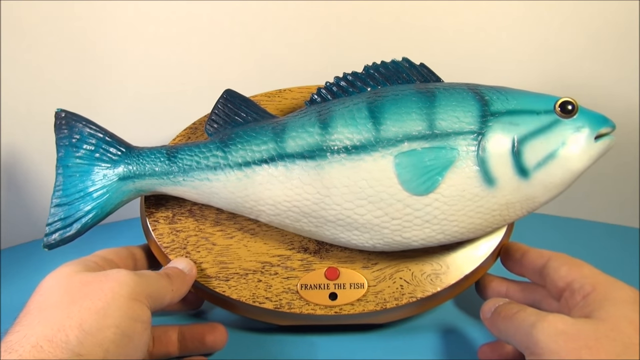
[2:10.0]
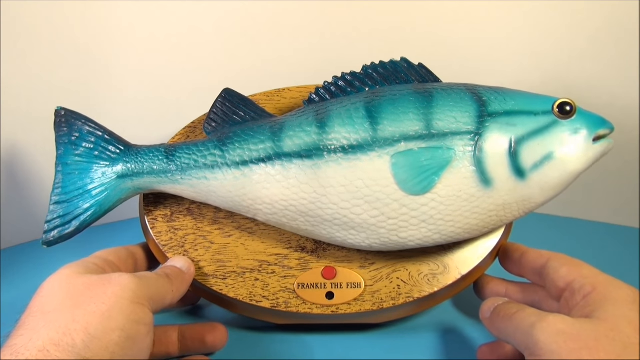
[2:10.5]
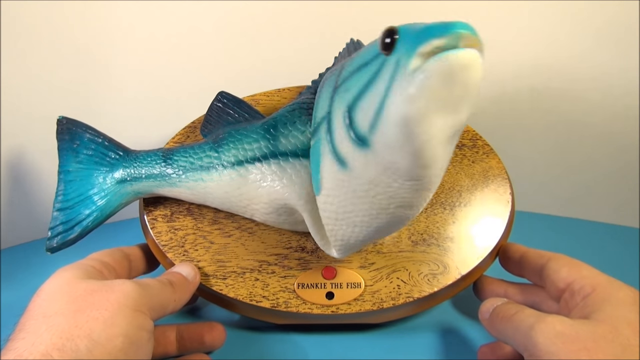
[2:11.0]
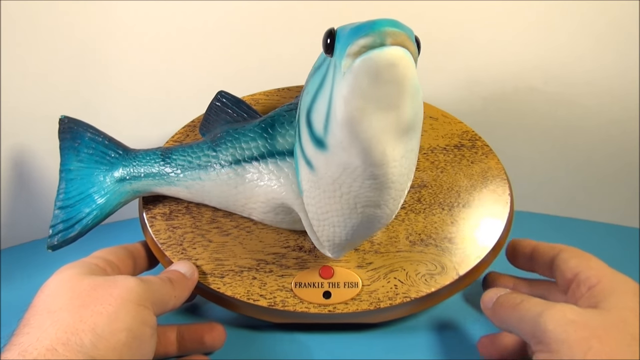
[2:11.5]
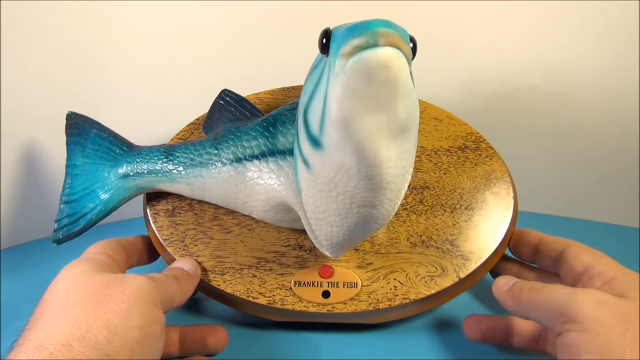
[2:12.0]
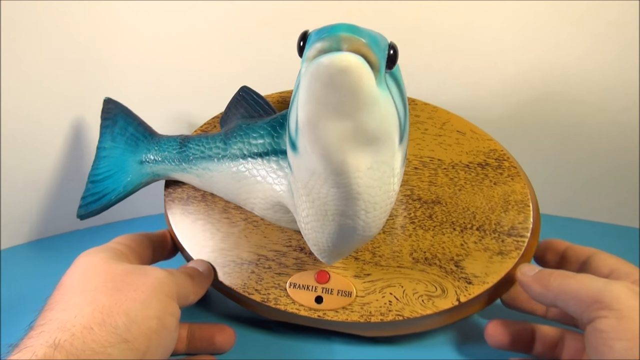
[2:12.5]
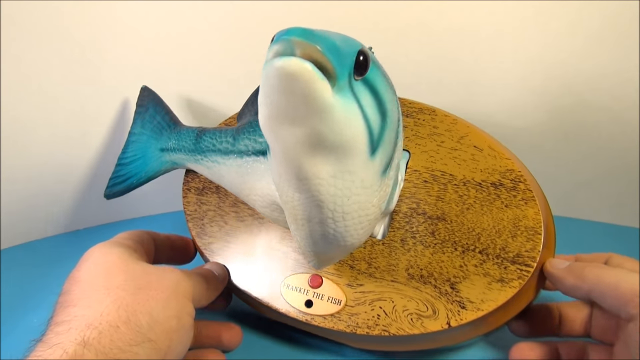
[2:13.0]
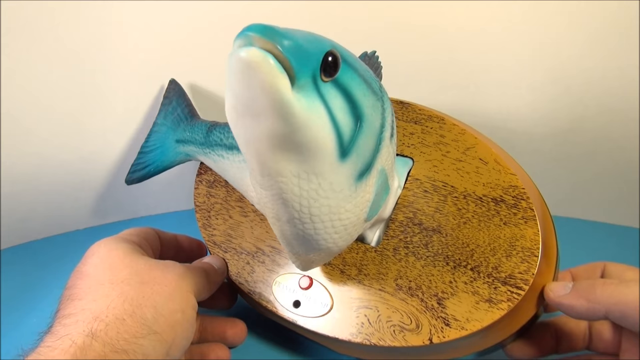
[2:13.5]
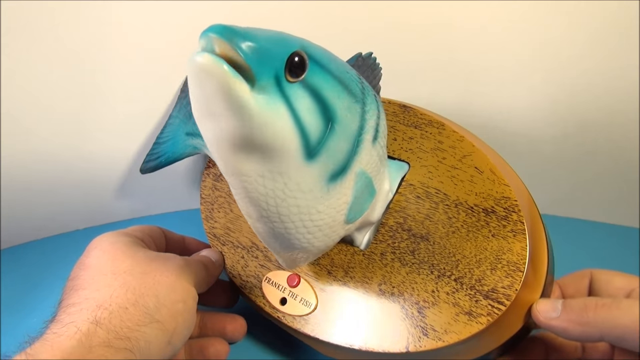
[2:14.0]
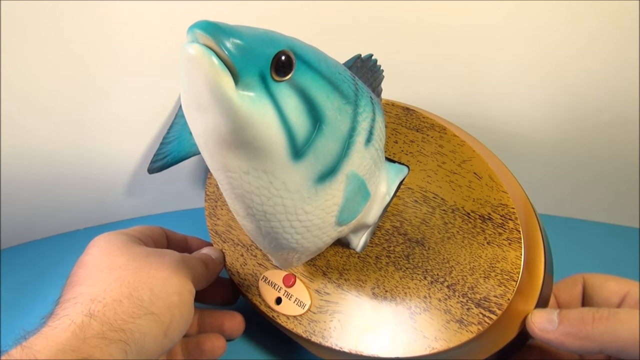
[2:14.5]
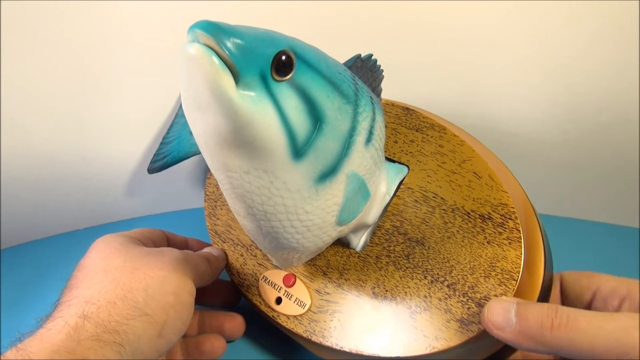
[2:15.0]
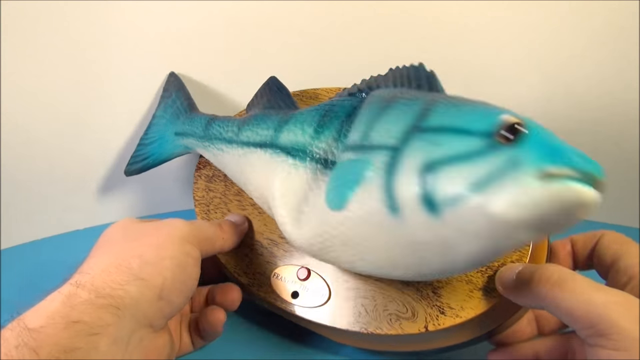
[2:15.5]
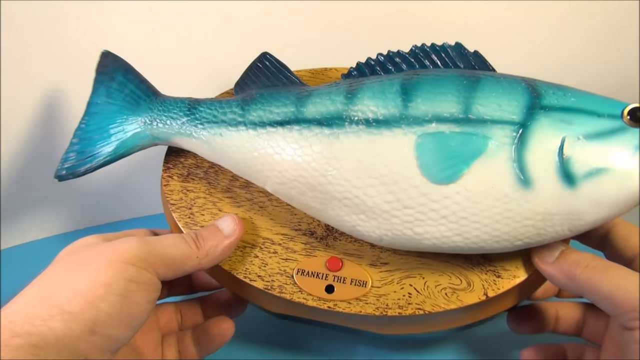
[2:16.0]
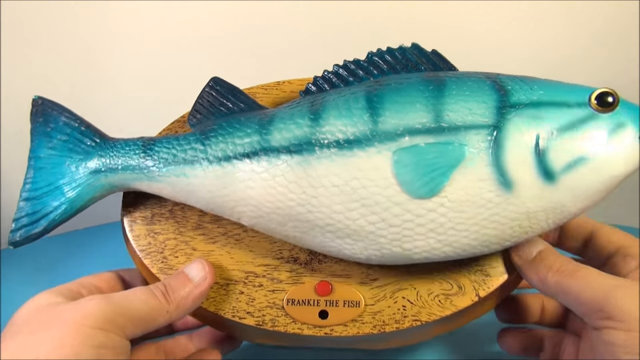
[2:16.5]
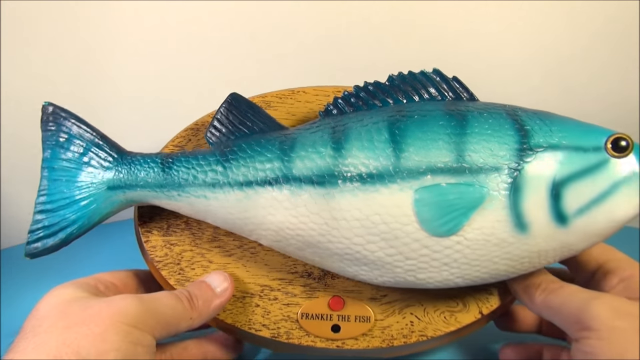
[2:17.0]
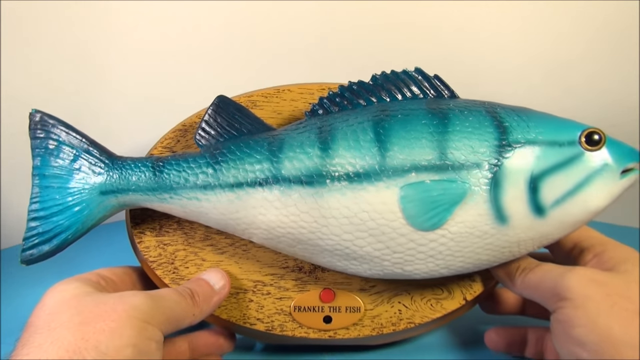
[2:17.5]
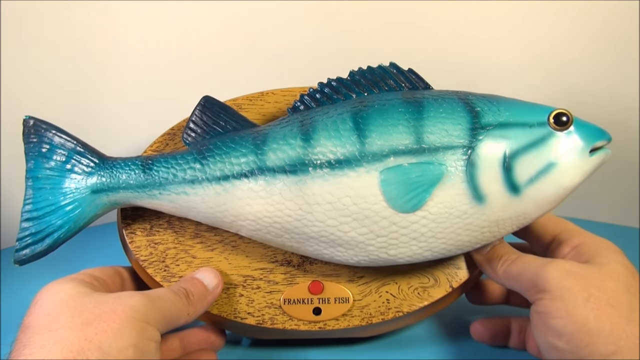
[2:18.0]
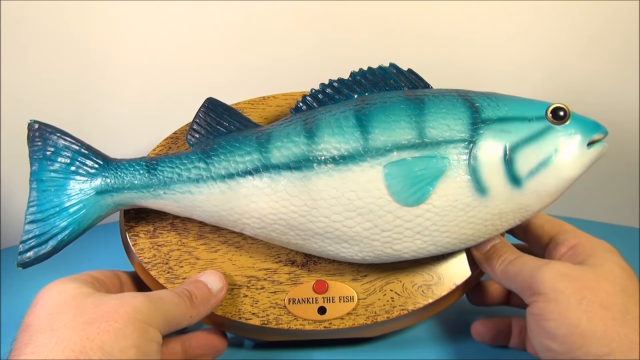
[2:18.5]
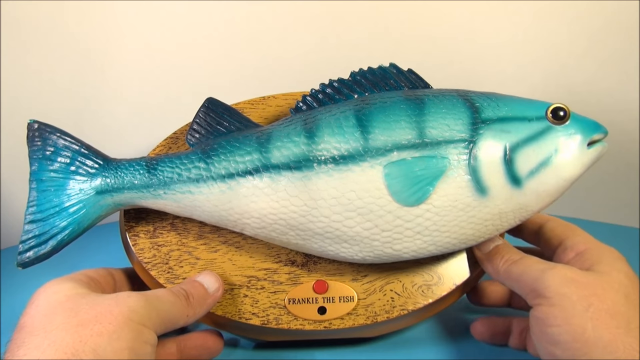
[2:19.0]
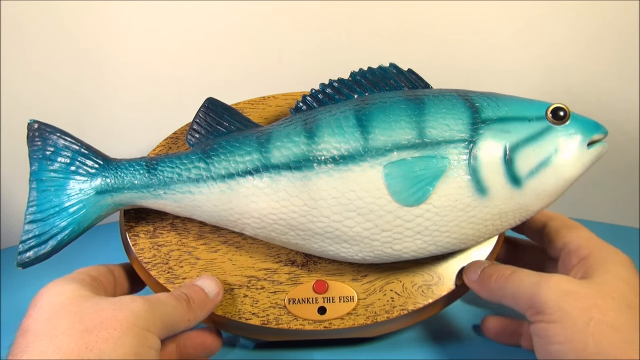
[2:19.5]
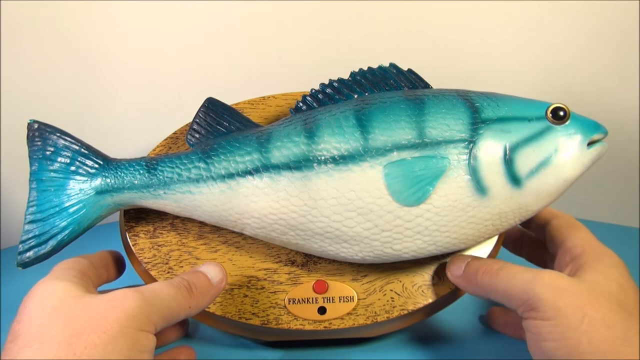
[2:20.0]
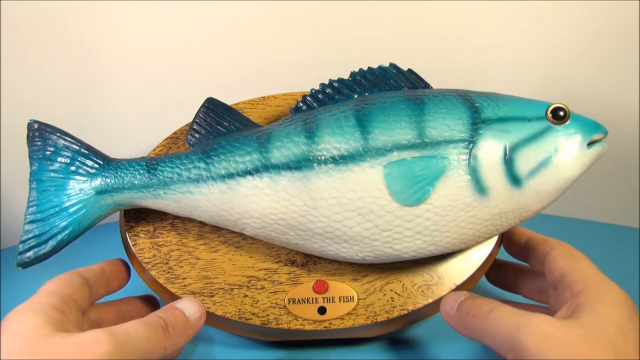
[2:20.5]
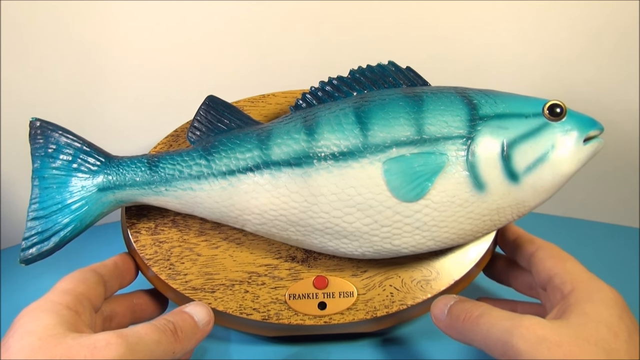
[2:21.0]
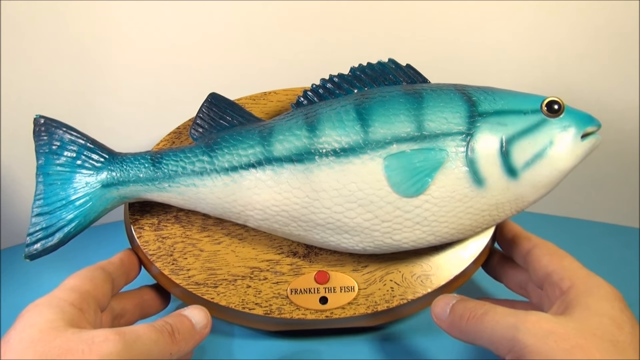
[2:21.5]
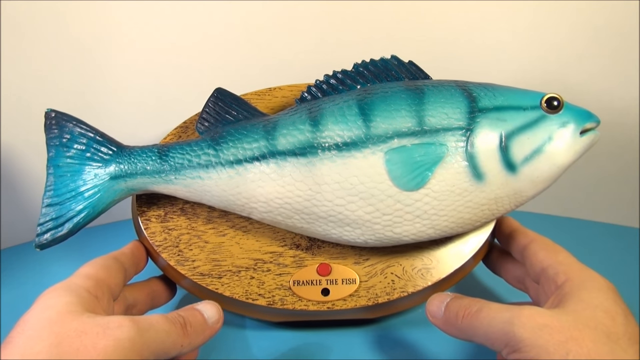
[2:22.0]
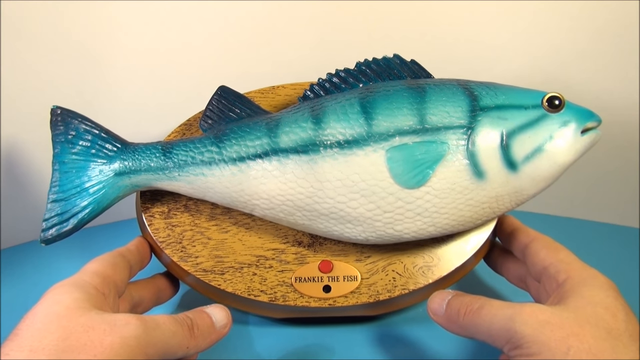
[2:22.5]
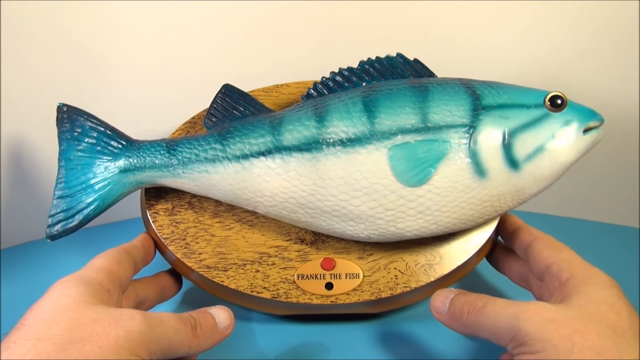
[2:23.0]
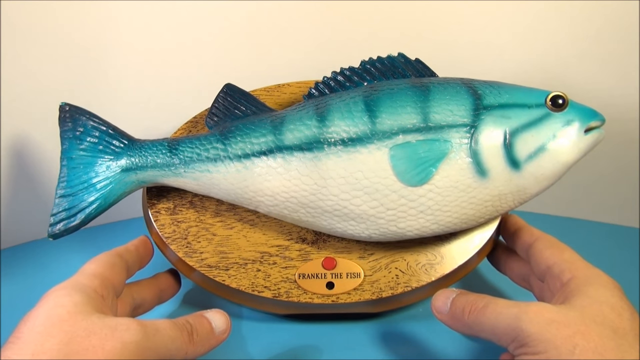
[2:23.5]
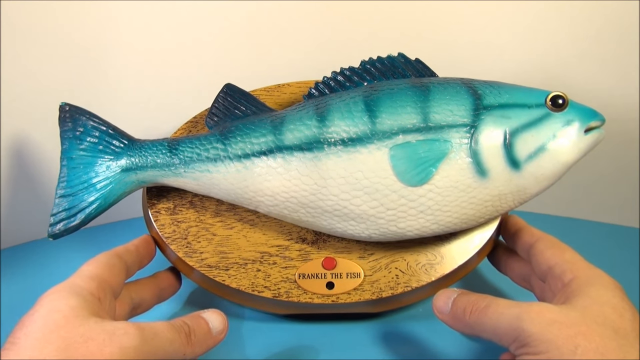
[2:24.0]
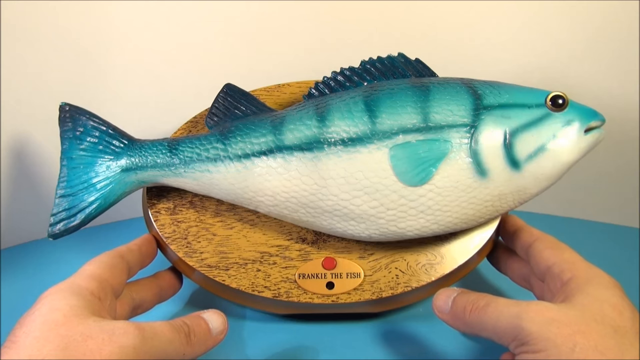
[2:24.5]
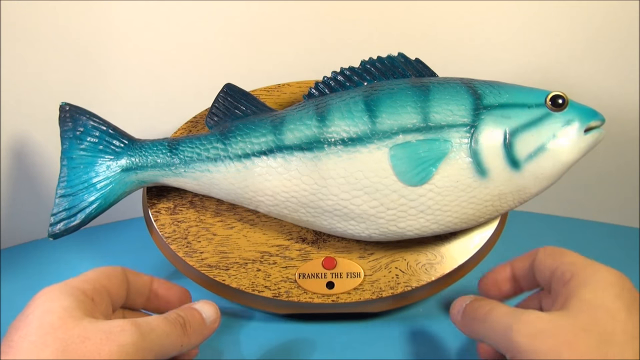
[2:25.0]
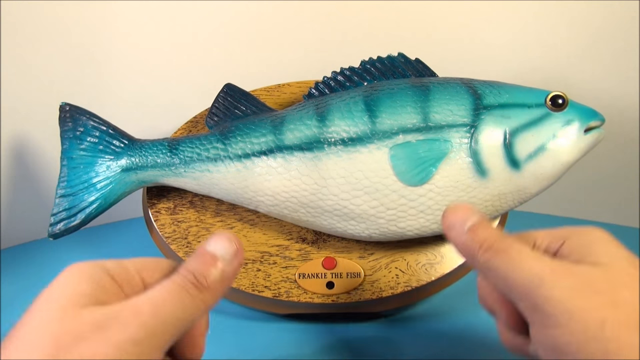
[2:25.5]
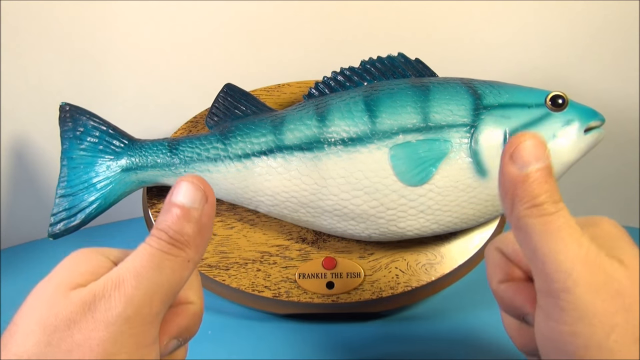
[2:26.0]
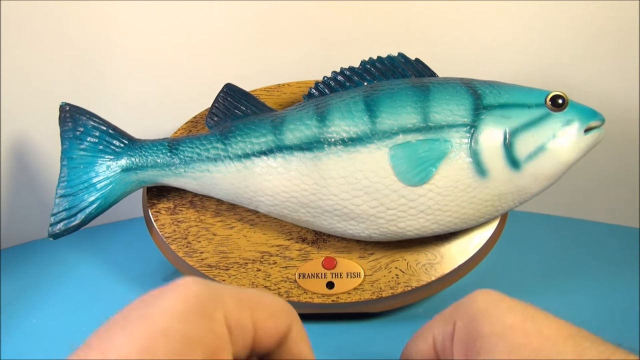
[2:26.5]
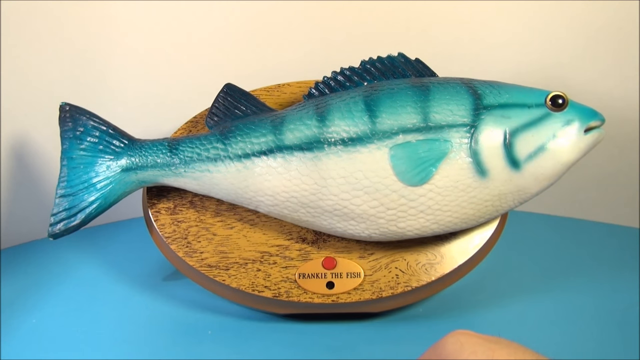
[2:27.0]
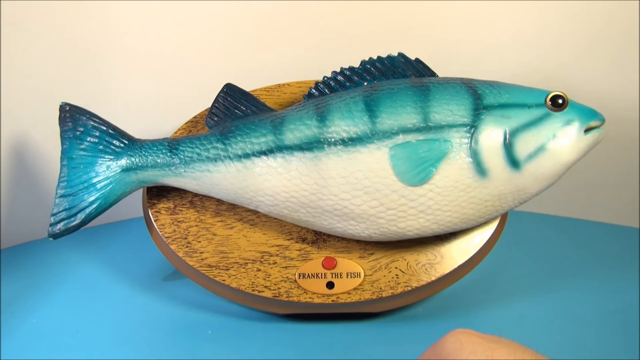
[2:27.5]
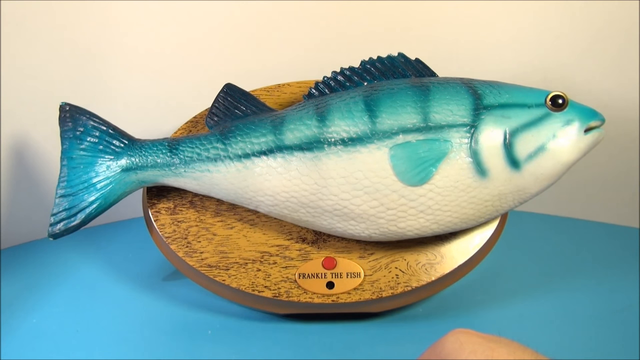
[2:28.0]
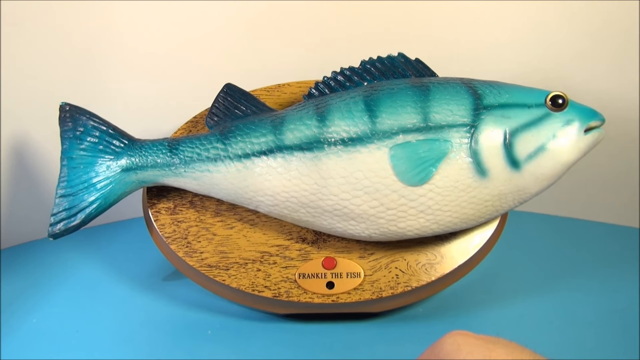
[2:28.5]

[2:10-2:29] The person turns the fish and mounting plate to the left, and there is some glare from the light source off the mounting plate. The fish turns its head 90 degrees, sings and goes flat, and then does not turn its head again, apparently set for a single turn. With its head turned, the fish can be seen attached to the mounting plate in what looks like a vertically oriented rectangular hole. Judging by the size of the hands and the hair on the lower arms, the person appears to be a man; only his hands are seen, and their shadows show on the table. At the very end he gives two thumbs up.